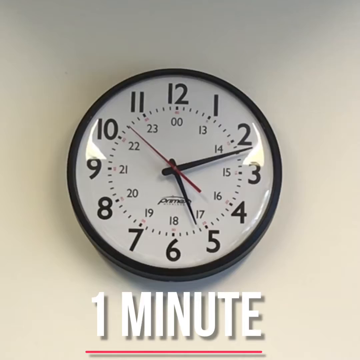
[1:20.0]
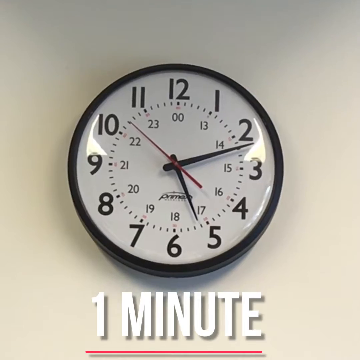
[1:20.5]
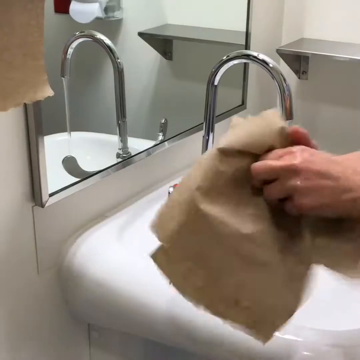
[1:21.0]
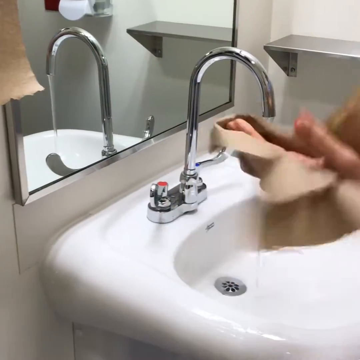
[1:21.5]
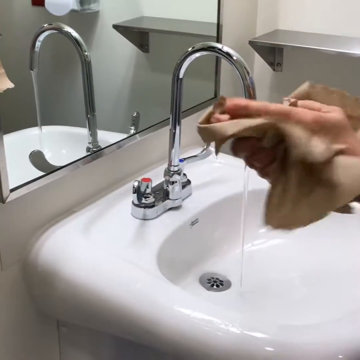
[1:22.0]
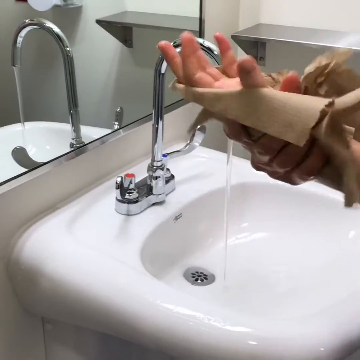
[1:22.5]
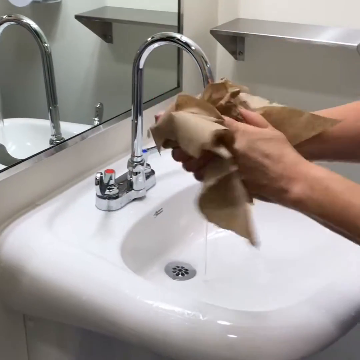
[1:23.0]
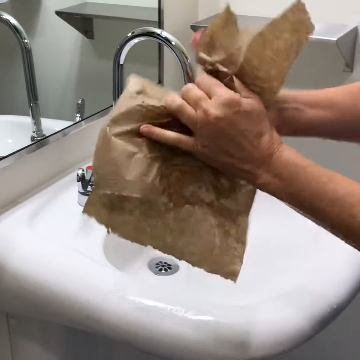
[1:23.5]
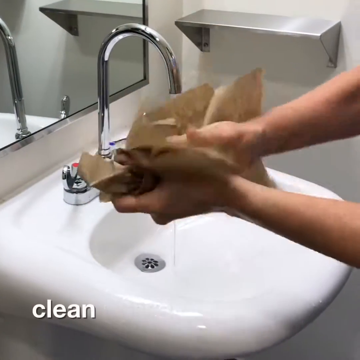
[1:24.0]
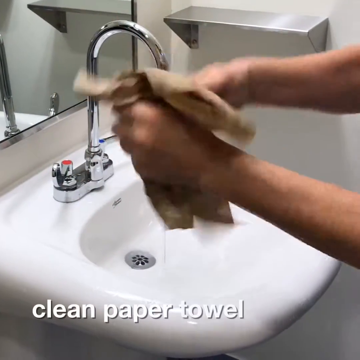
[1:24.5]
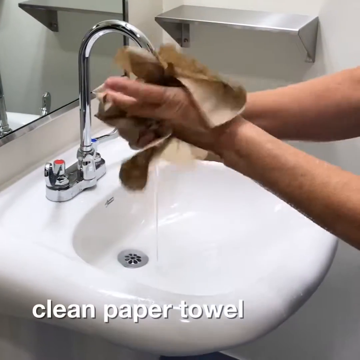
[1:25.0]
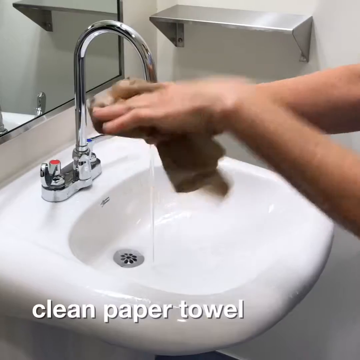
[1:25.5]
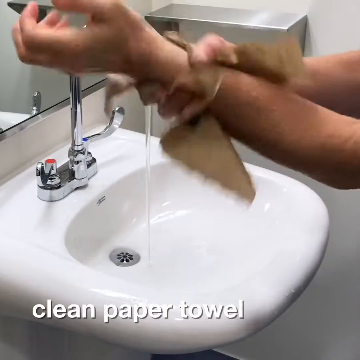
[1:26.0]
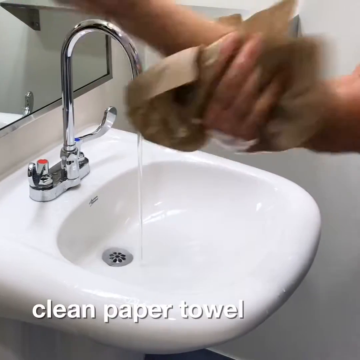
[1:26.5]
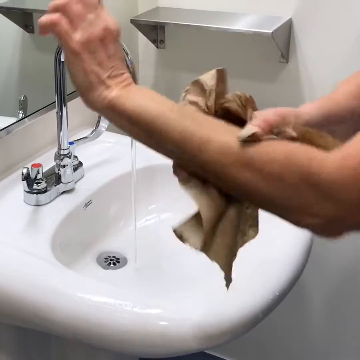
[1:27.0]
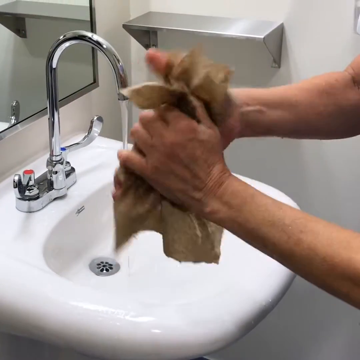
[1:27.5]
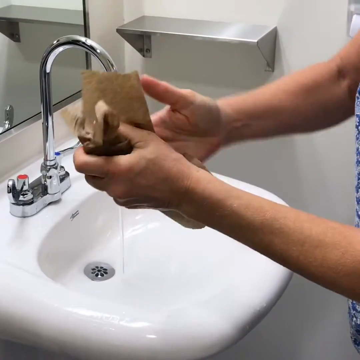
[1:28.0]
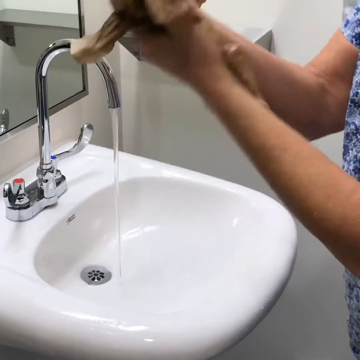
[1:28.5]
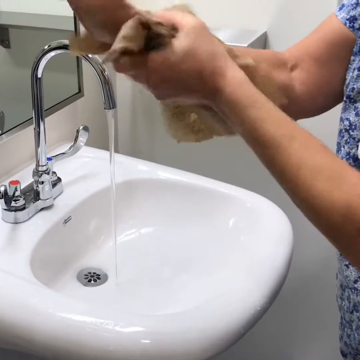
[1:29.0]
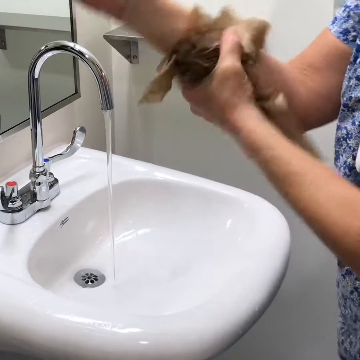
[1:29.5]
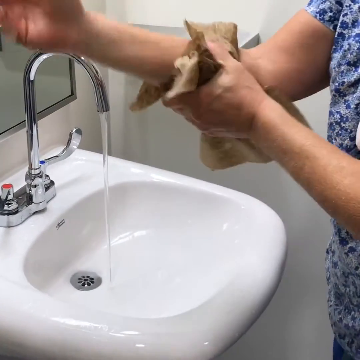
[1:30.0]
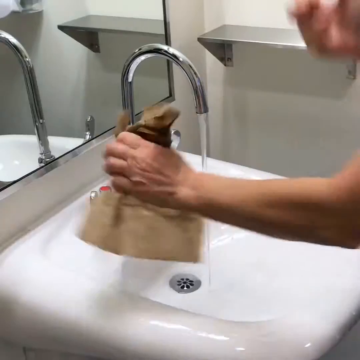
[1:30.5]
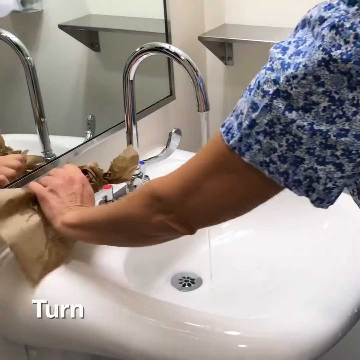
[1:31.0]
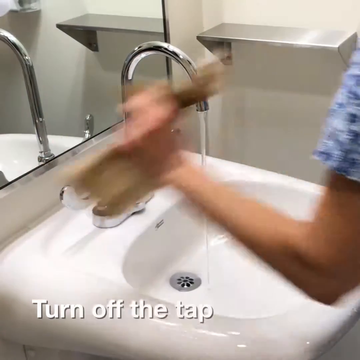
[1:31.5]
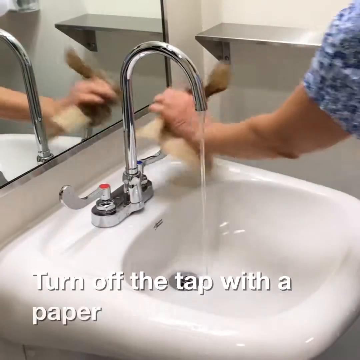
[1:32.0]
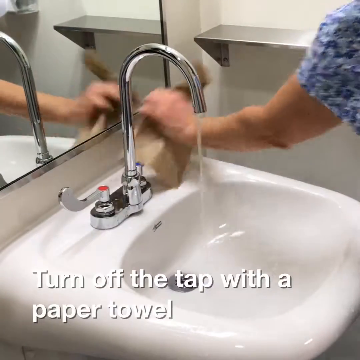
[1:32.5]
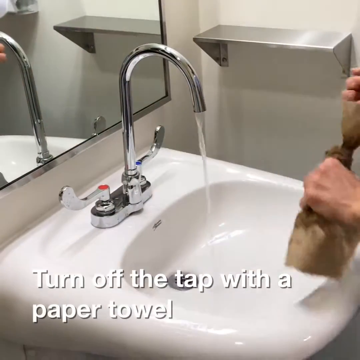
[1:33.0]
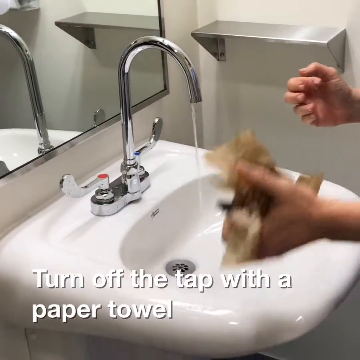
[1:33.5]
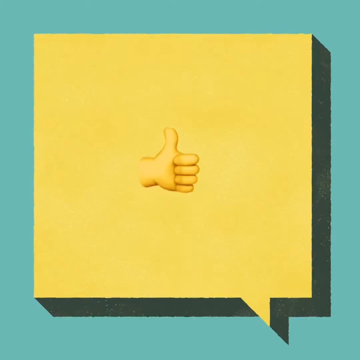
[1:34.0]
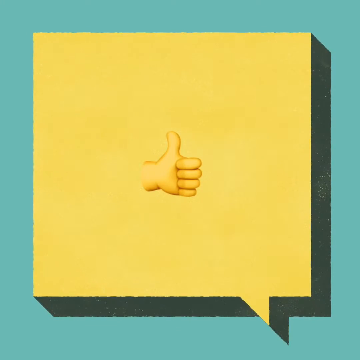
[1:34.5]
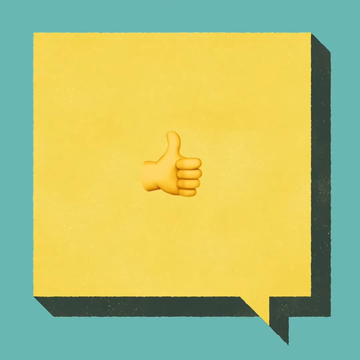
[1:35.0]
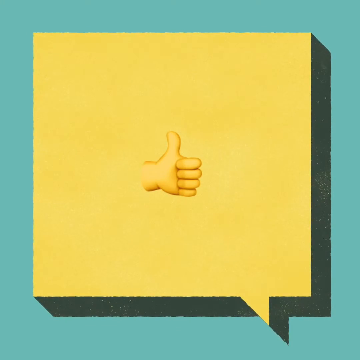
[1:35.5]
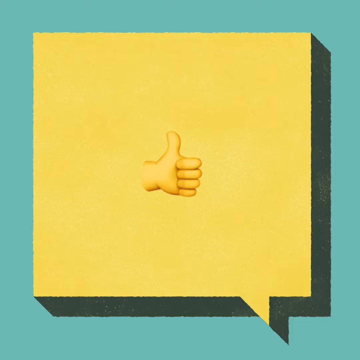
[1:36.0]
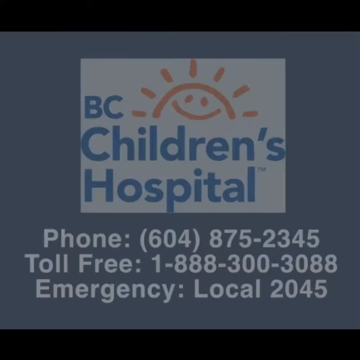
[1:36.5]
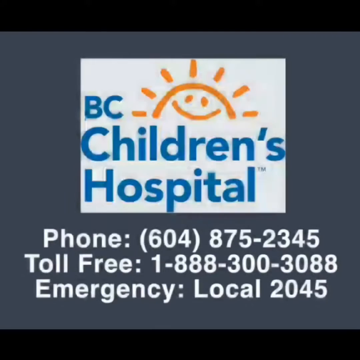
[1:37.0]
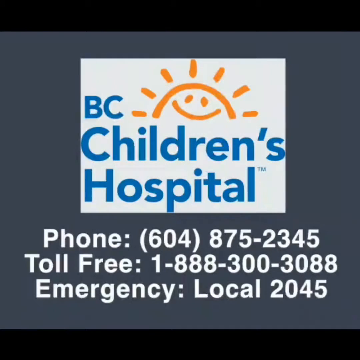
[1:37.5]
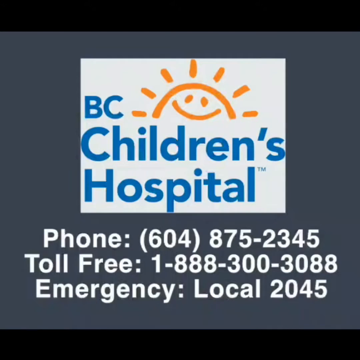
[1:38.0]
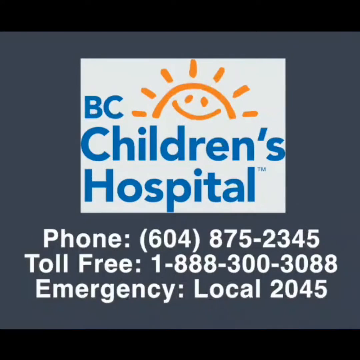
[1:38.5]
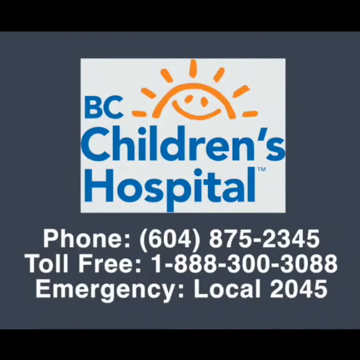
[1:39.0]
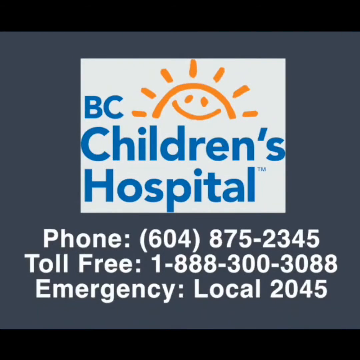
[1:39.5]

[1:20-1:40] The scene continues in the same way, and the body camera is somewhat visible. The person takes clean paper towels, with the text "clean paper towels" on screen, and dries their hands, including between their fingers. They then use those same paper towels to turn off both the hot and the cold handles. The video switches to a slide showing a thumbs up. The final slide has a dark grey background with black bars at the top and bottom and a white box with "BC Children's hospital" in blue lettering and the hand-drawn sun in yellow, along with white letters and numbers for the phone, toll-free and emergency numbers.